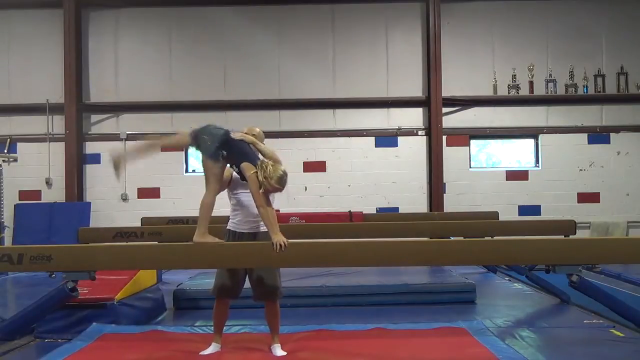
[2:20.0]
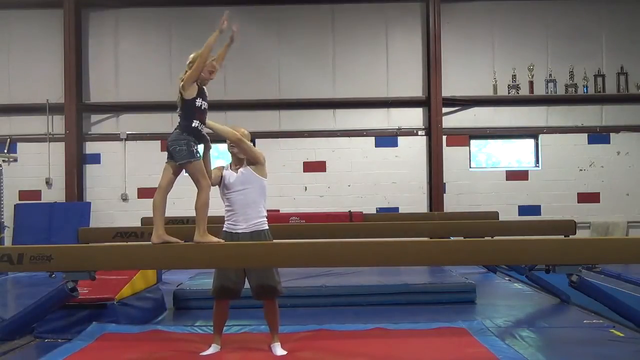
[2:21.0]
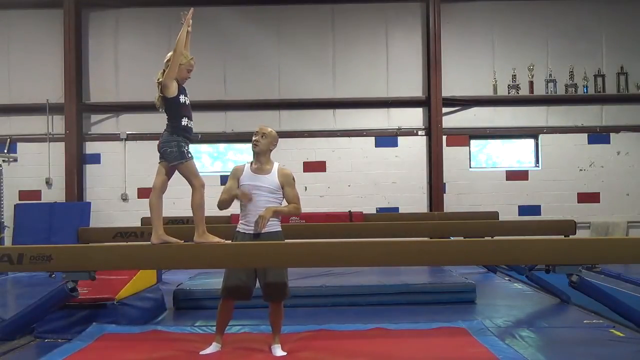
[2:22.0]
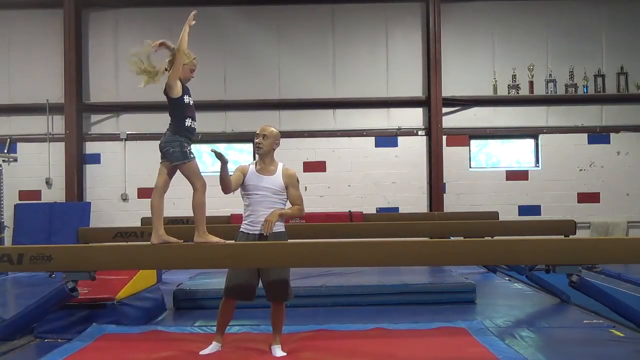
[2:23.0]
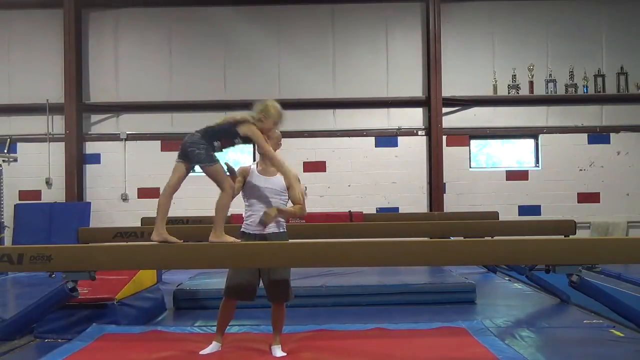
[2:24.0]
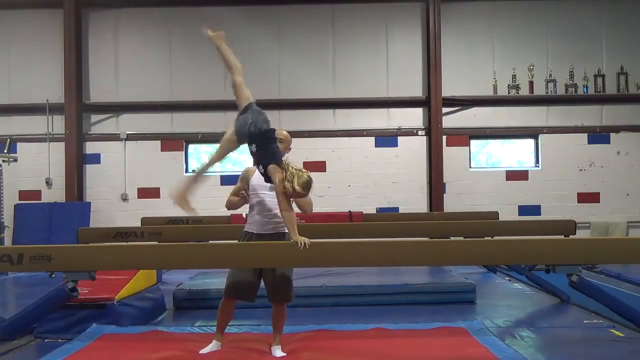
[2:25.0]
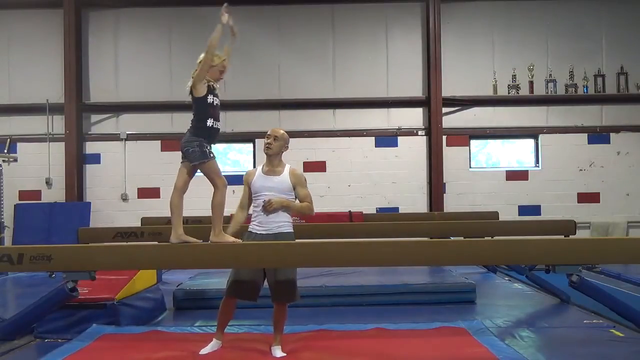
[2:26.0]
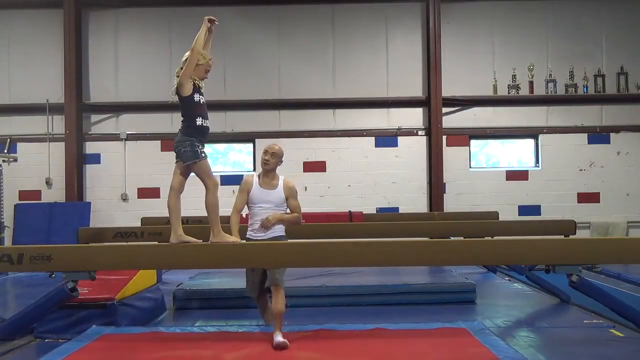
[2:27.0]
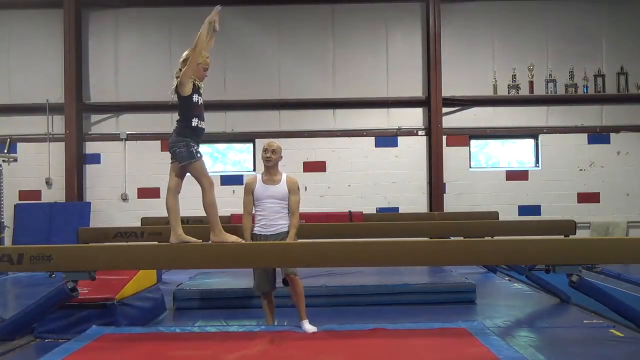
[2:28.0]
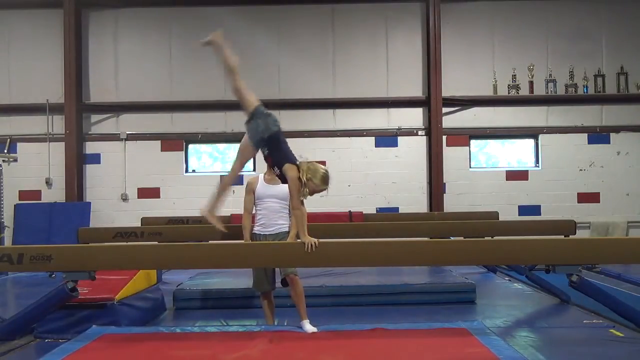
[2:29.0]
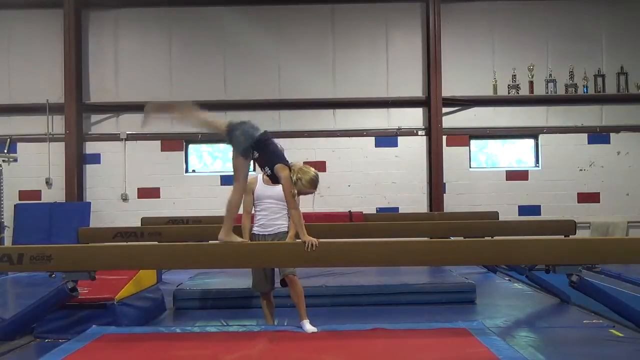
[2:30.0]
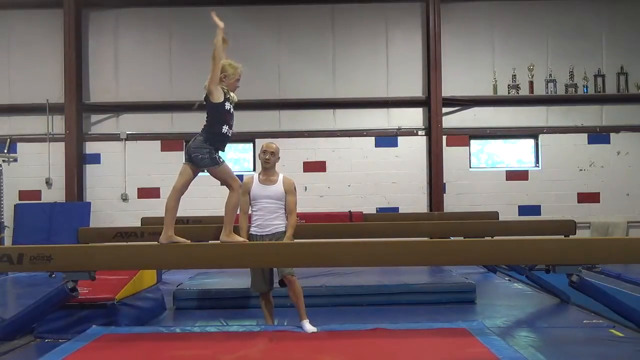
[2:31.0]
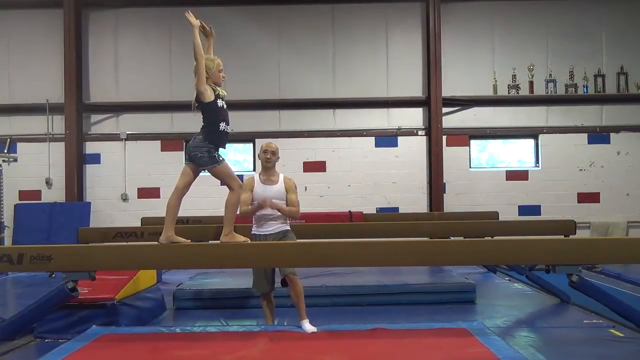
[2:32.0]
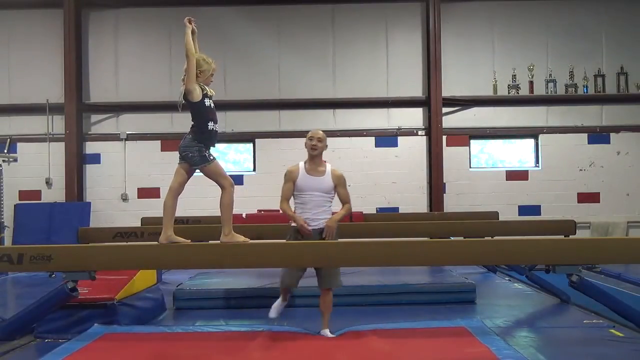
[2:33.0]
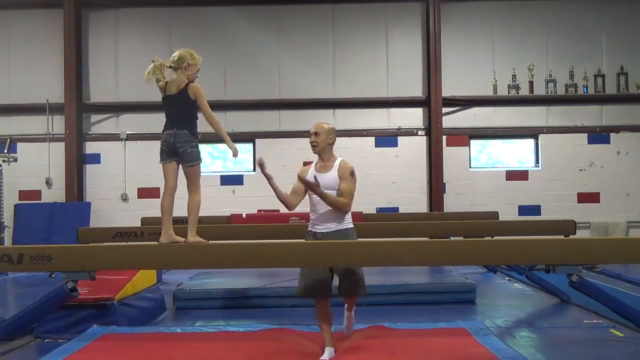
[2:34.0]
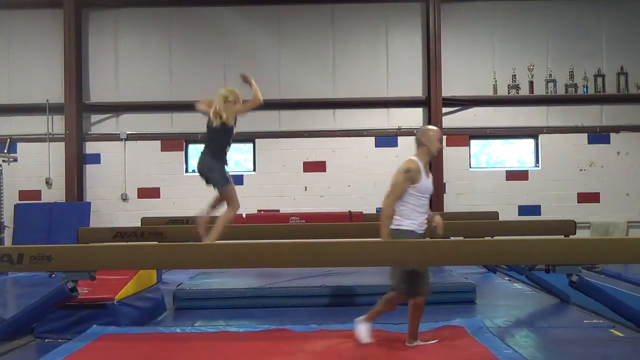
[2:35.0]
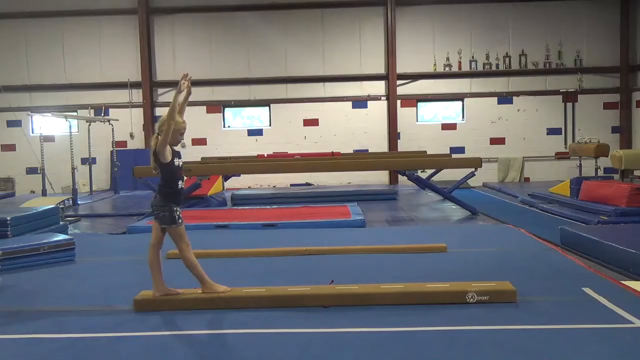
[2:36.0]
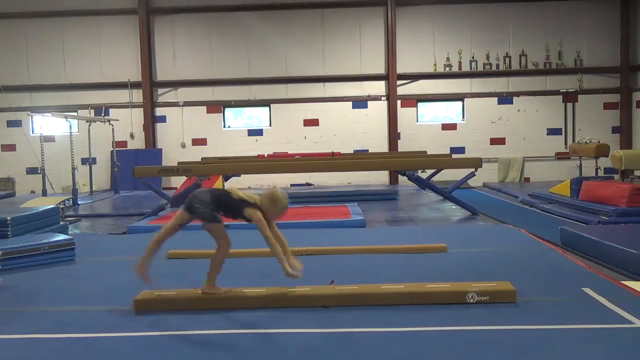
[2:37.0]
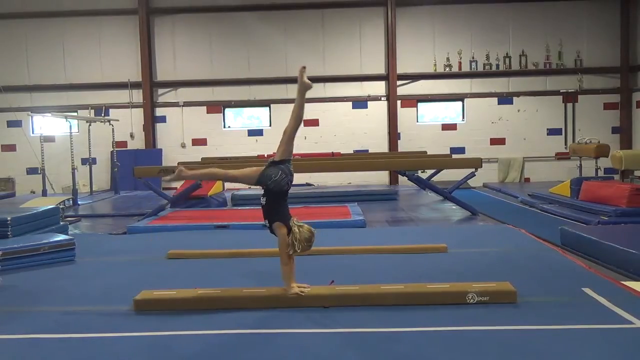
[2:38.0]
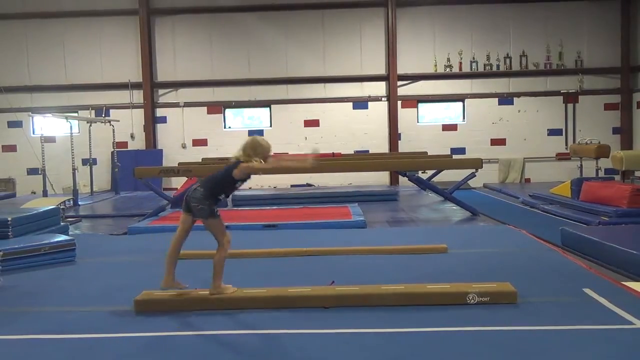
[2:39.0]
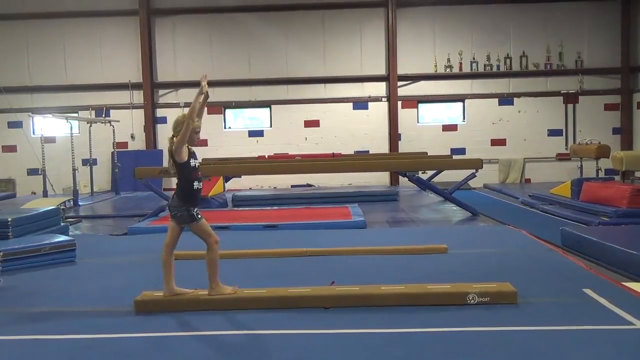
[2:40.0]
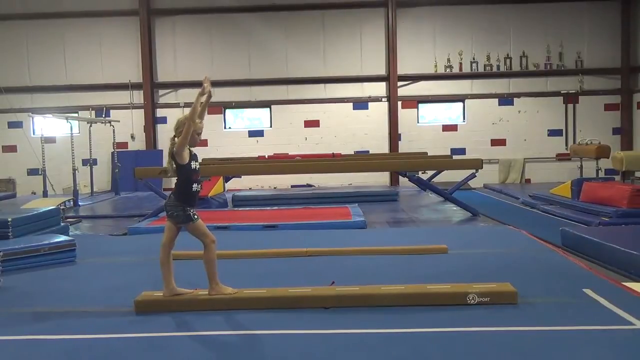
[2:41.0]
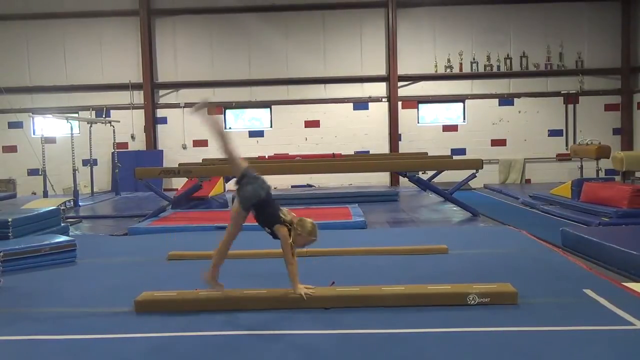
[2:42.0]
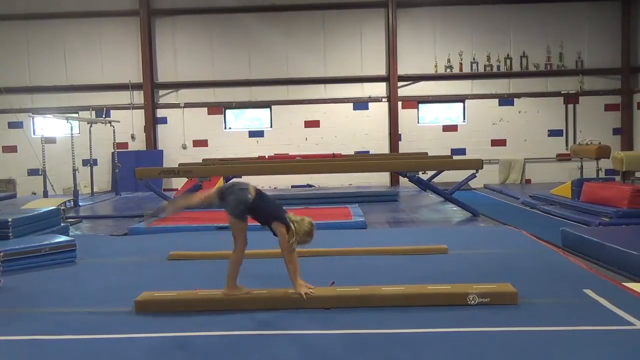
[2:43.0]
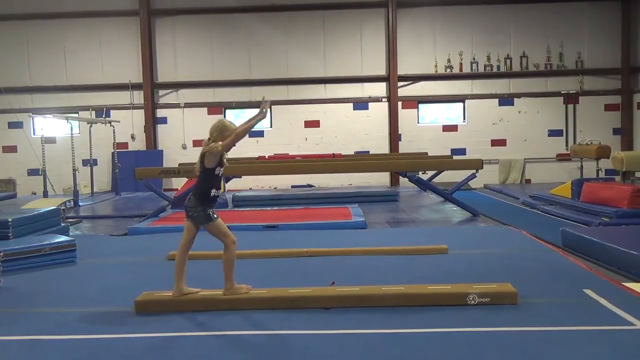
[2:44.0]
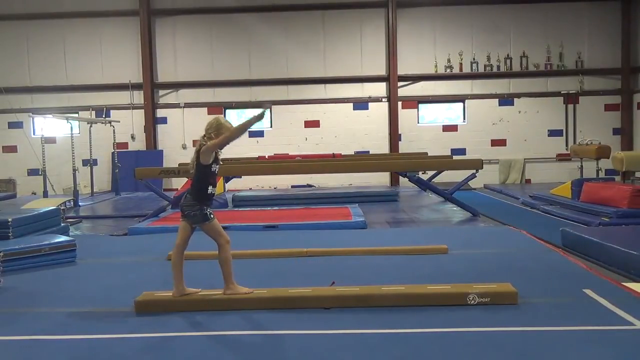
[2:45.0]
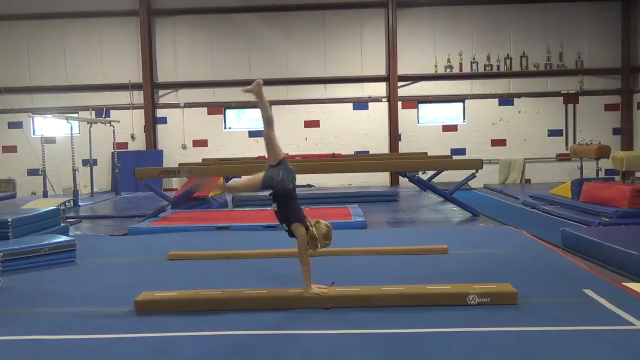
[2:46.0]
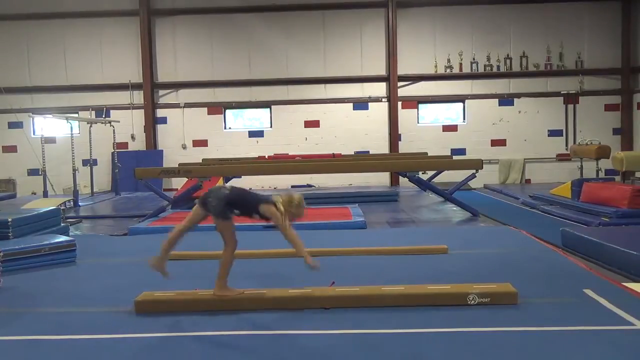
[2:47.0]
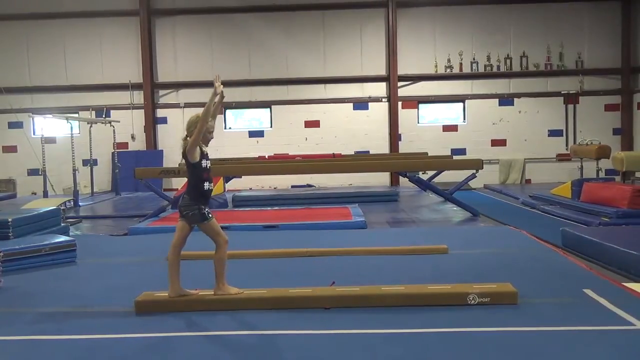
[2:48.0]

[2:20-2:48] A little girl on a wooden beam does tricks, moving across the beam confidently. In the top right section of the frame, trophies are lined up against the wall. In the background, an alternating pattern of red and blue squares is on the wall, along with a number of windows.